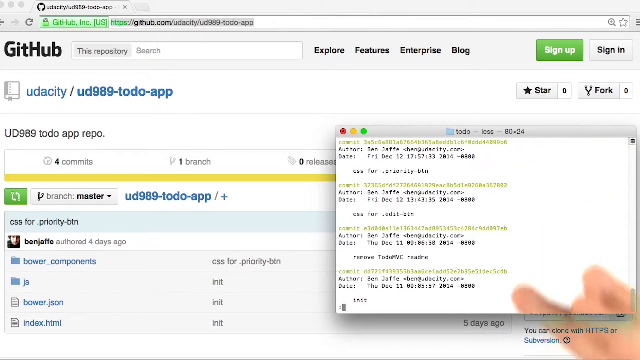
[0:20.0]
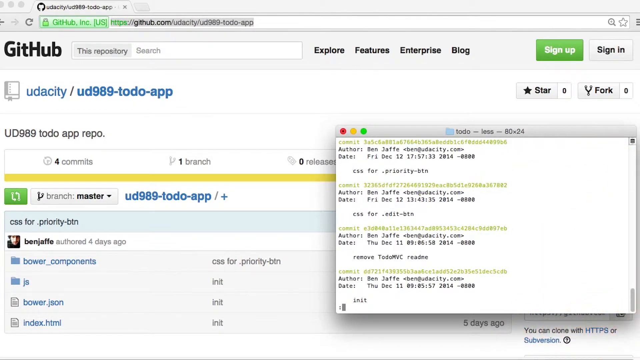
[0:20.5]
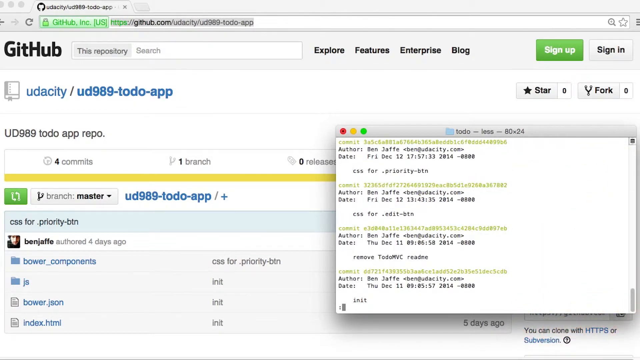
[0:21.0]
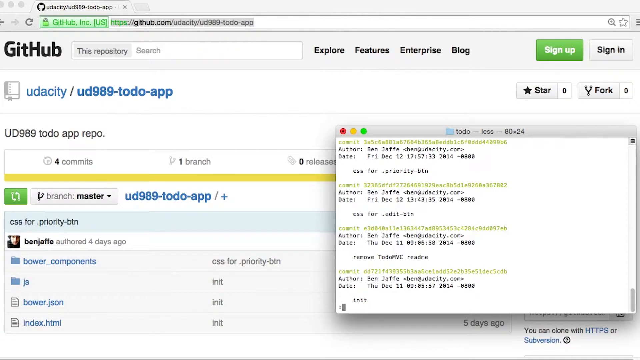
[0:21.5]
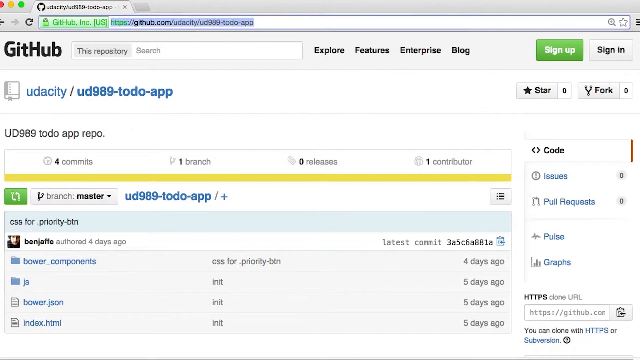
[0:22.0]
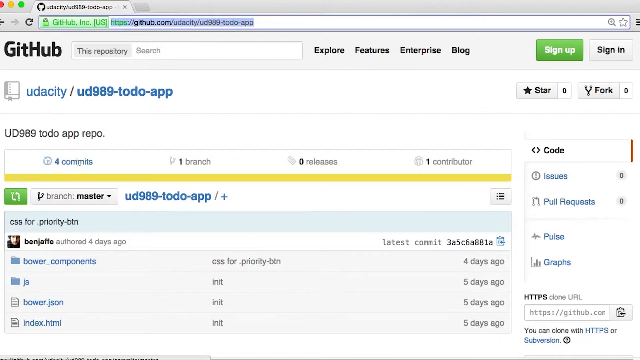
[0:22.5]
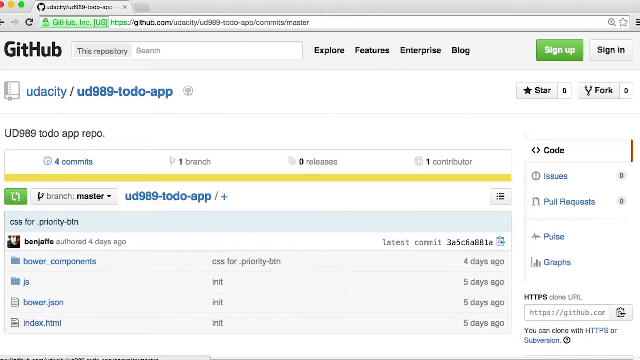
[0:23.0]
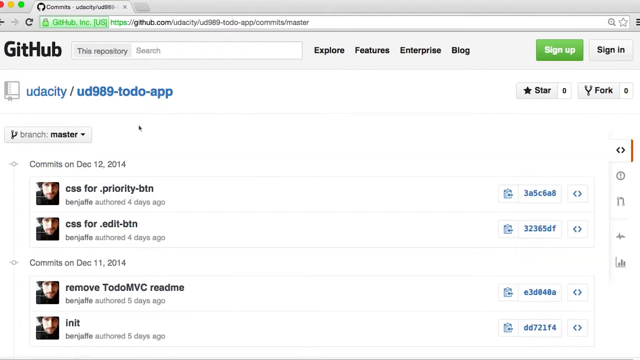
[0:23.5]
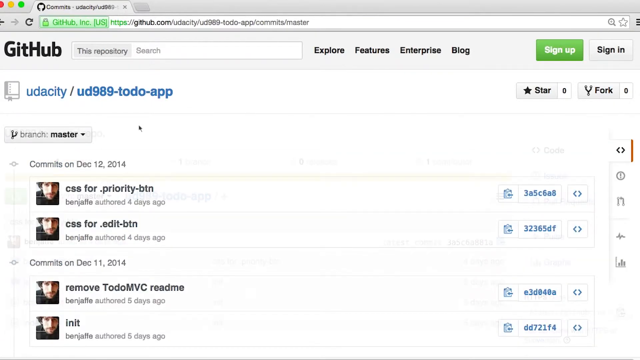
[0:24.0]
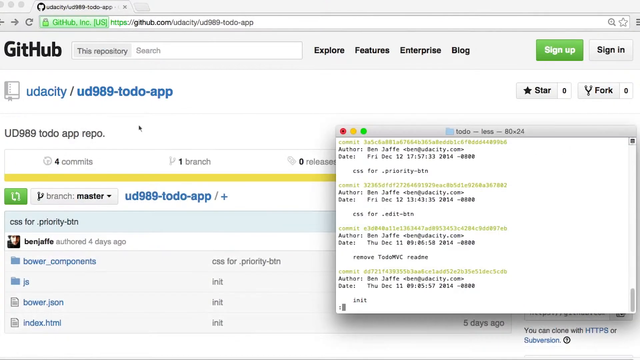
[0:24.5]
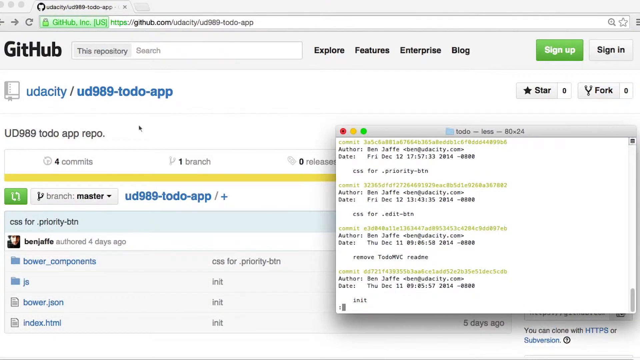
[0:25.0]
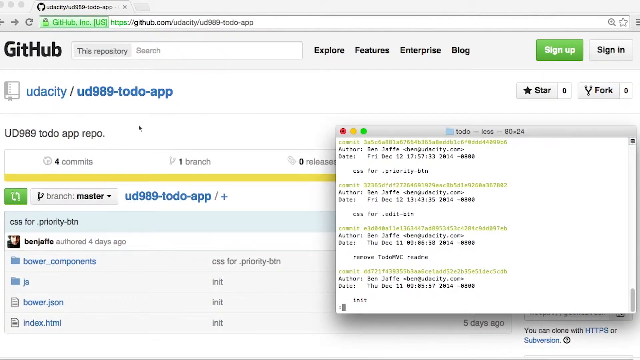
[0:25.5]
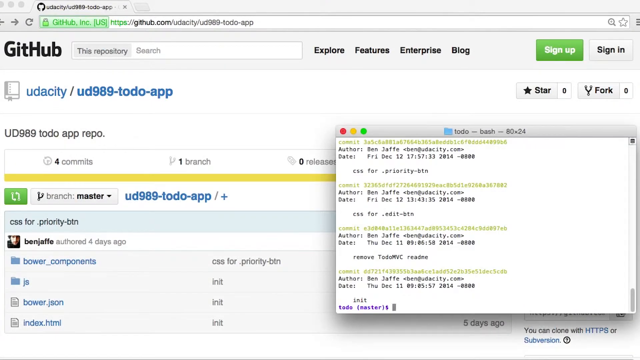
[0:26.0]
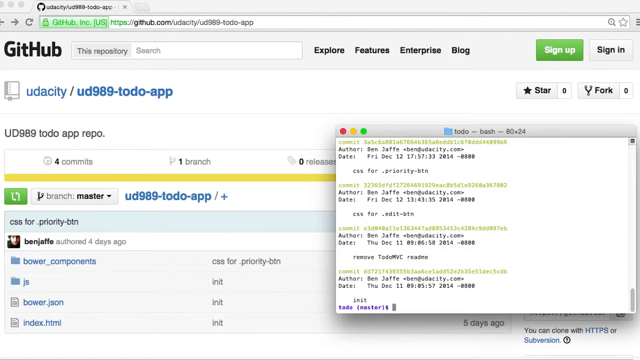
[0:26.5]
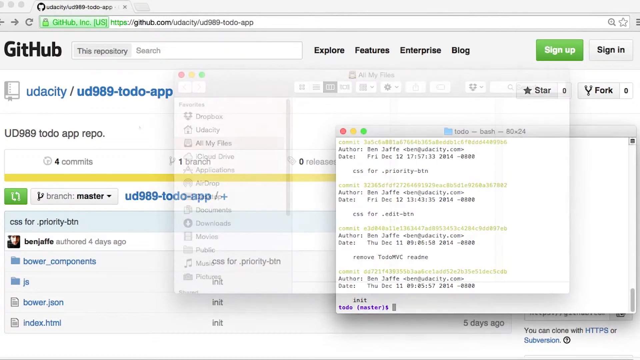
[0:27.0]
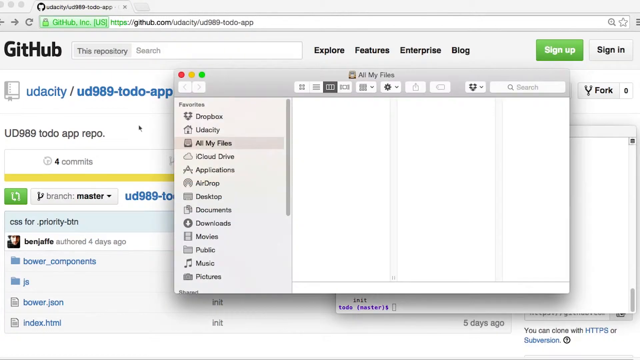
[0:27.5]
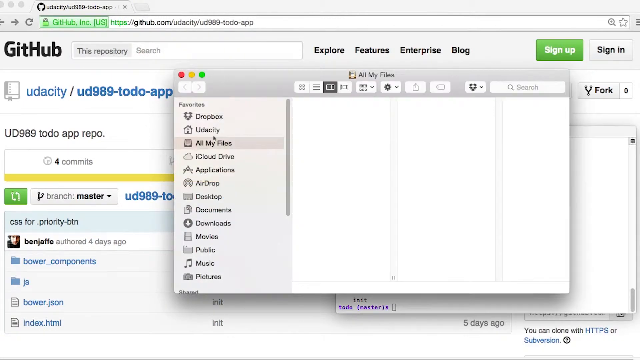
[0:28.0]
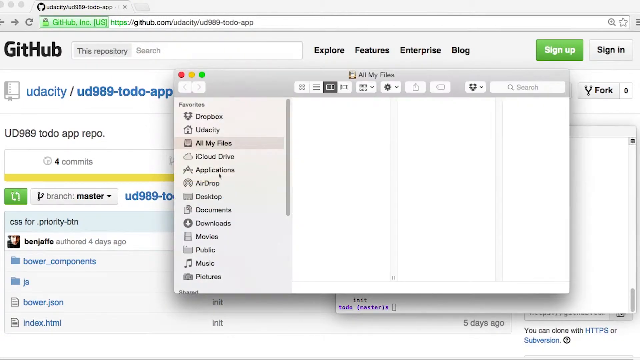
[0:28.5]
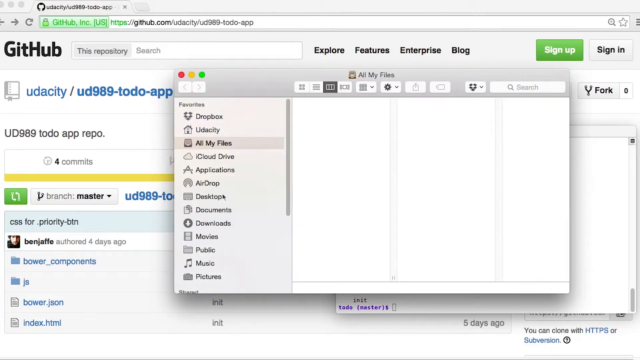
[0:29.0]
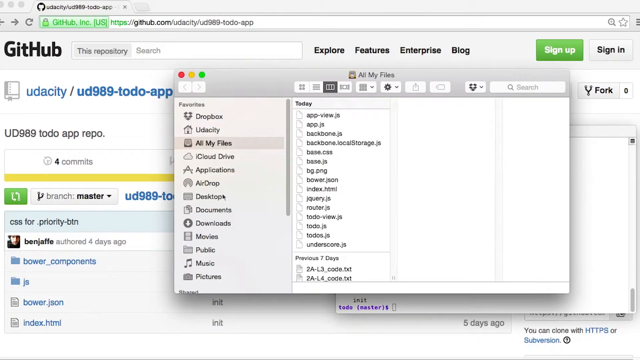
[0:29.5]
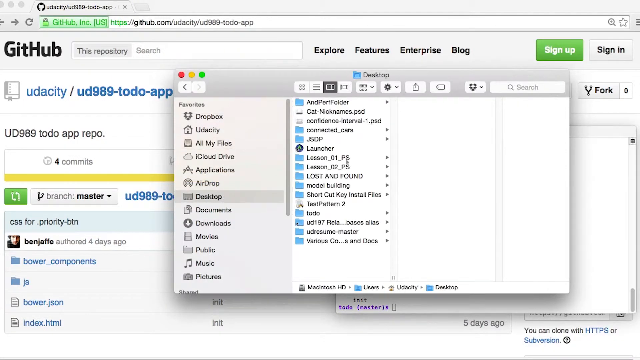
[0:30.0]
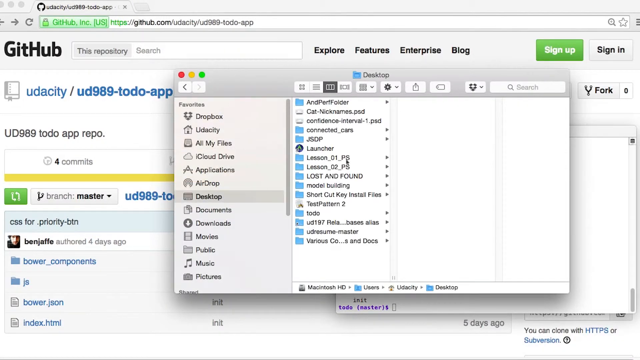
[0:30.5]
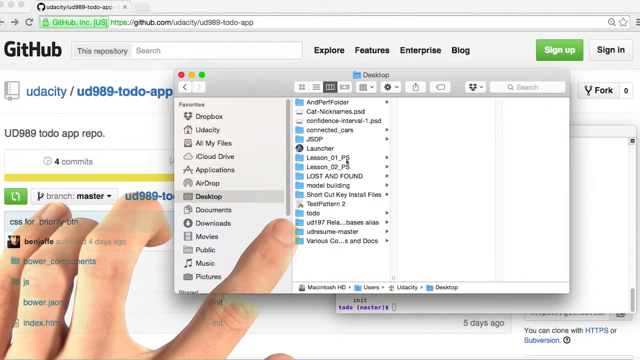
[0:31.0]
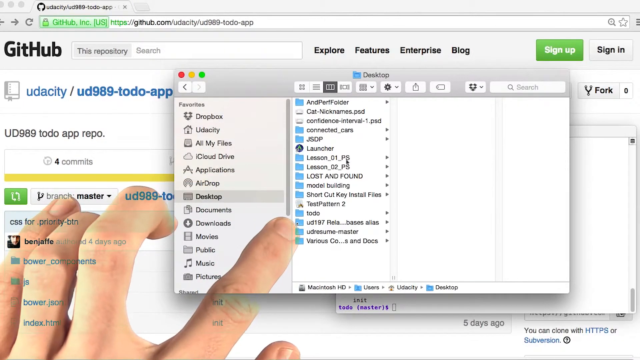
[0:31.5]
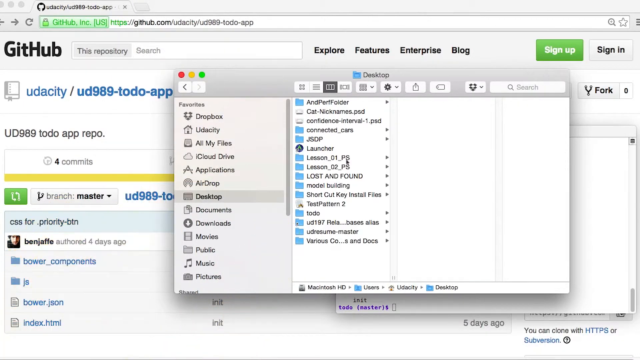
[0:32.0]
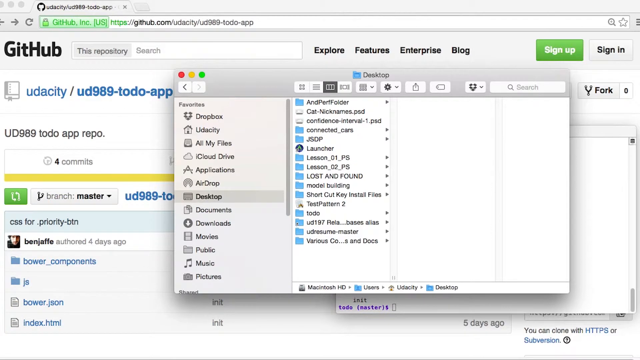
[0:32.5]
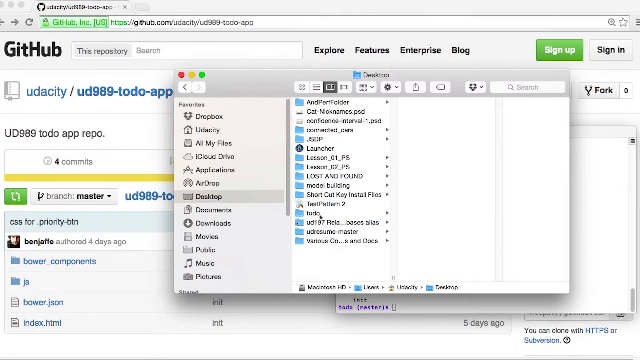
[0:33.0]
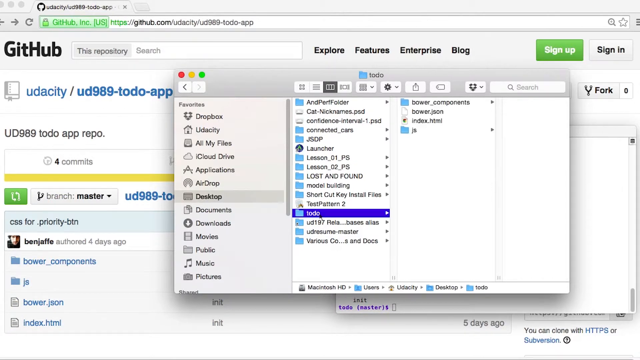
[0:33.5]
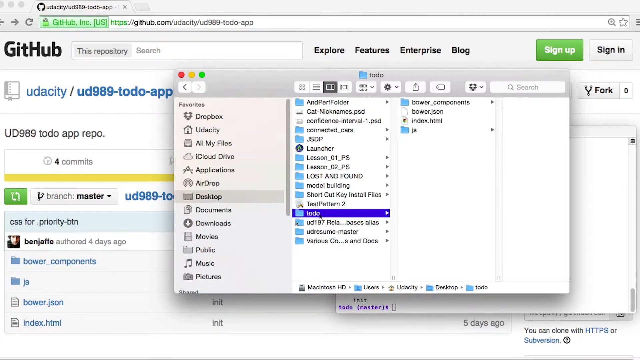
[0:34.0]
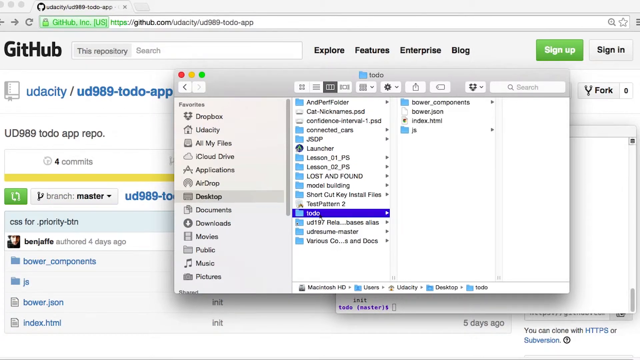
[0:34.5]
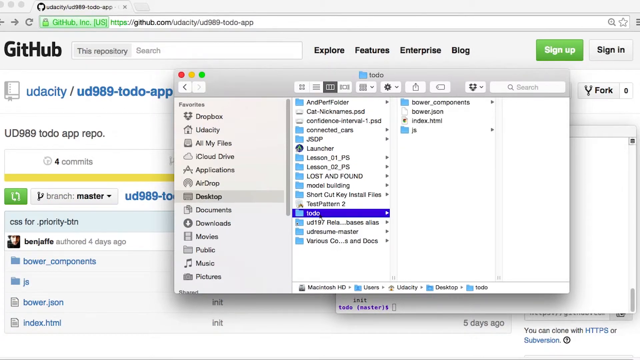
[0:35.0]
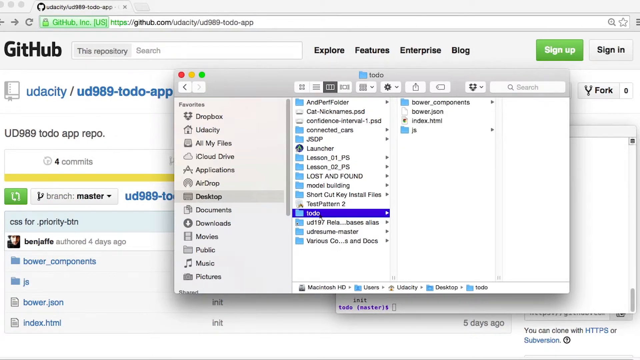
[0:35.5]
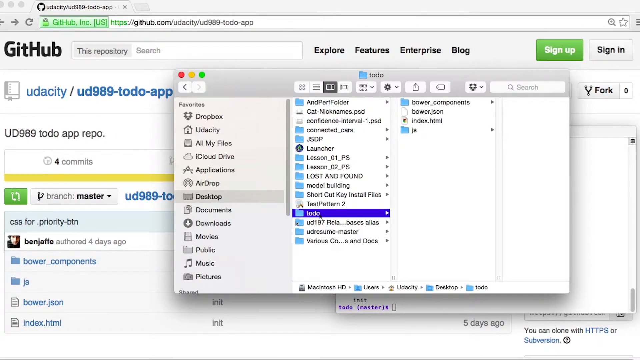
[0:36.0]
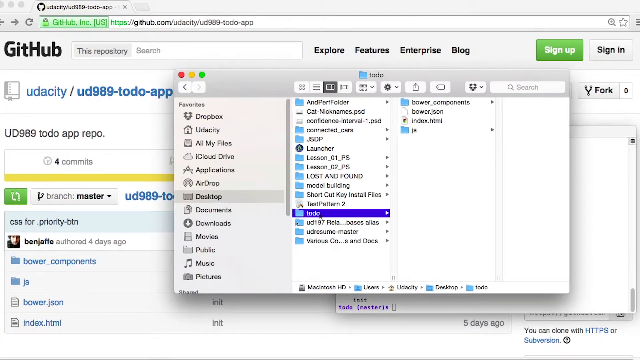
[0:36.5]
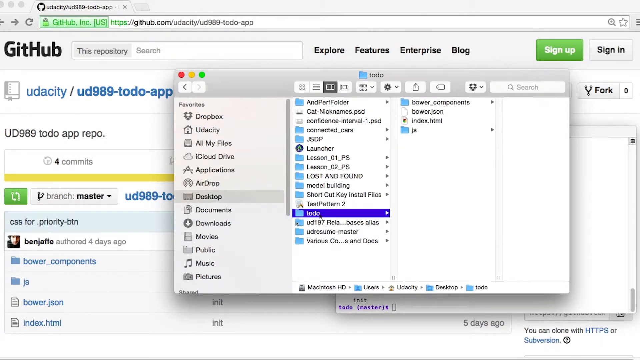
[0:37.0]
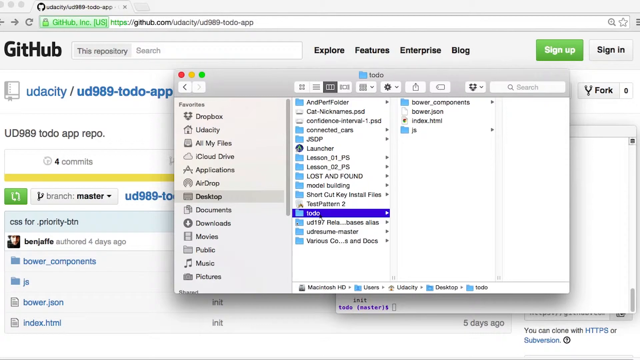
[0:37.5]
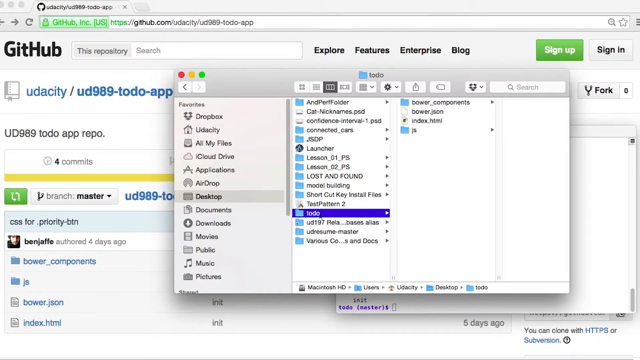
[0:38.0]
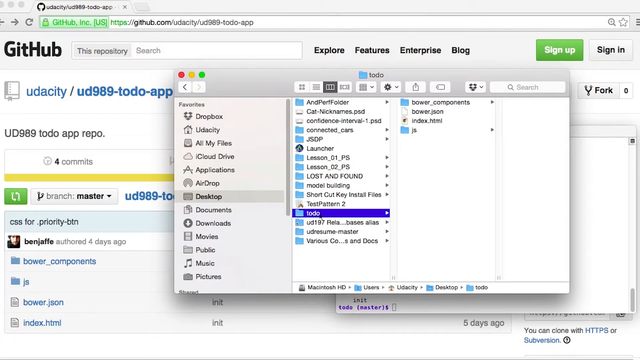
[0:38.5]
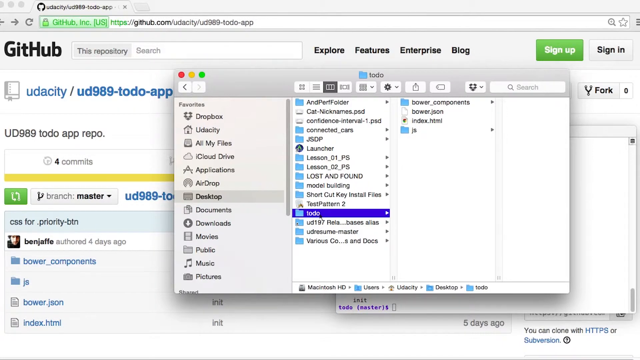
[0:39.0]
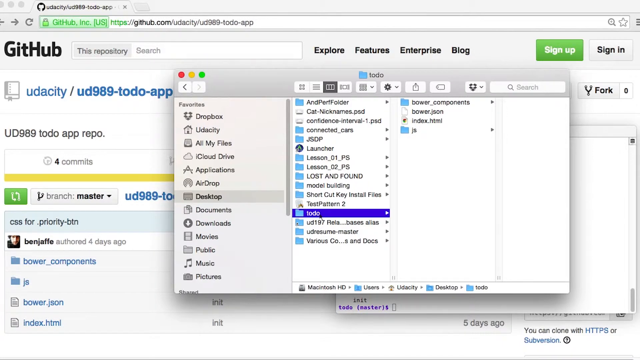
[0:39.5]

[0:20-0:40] The GitHub website and the folder remain open for a second. The hand is momentarily at the bottom right of the screen and then disappears; as it does, the folder disappears and the GitHub website switches to a different part of the site. The folder then reappears. Another folder is opened from the desktop, and a hand appears again and points at the folder on the screen. The mouse pointer moves to a folder called To Do and hovers over it. Meanwhile, the GitHub website in the background changes back to the original section it showed at the beginning. Multiple folders from the Desktop folder can be seen next to the To Do folder, running from the top to the bottom on the right side of the screen.